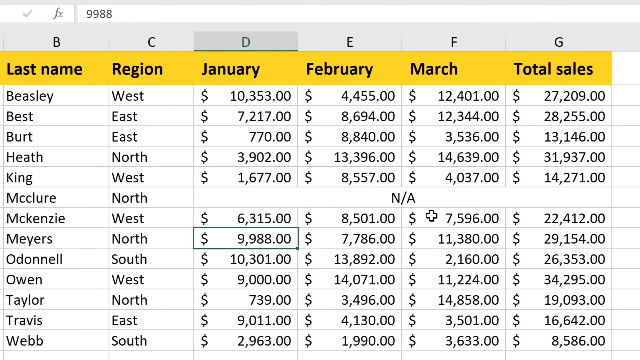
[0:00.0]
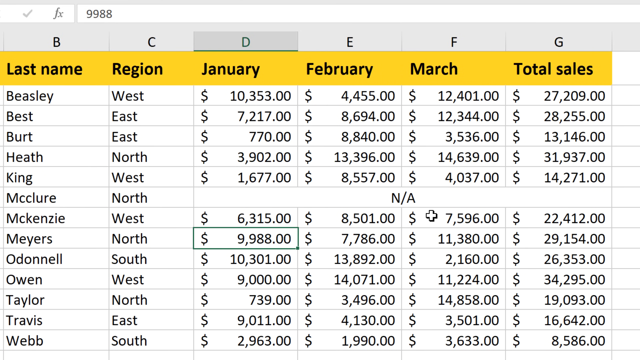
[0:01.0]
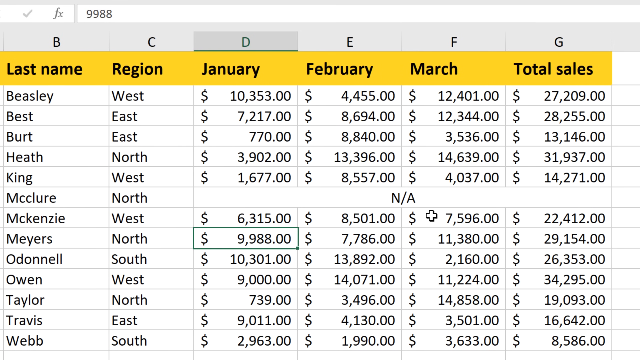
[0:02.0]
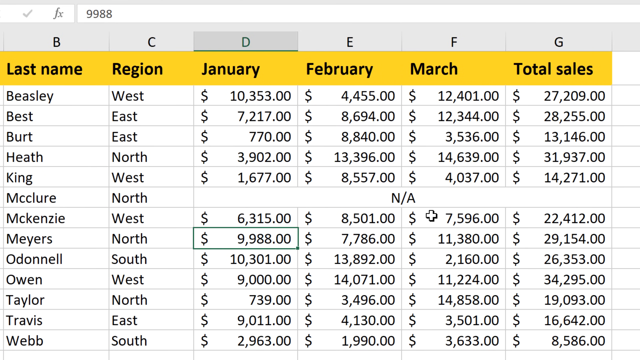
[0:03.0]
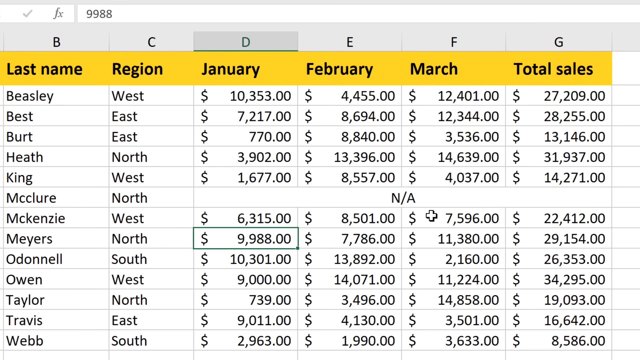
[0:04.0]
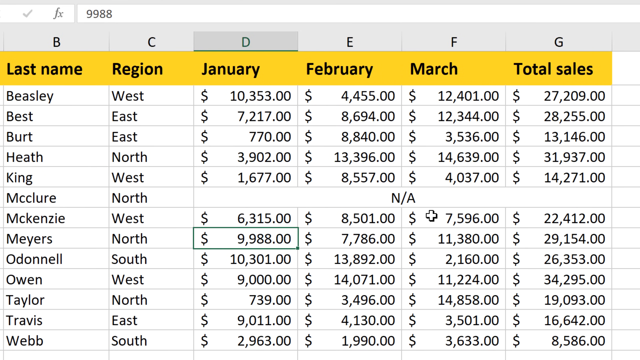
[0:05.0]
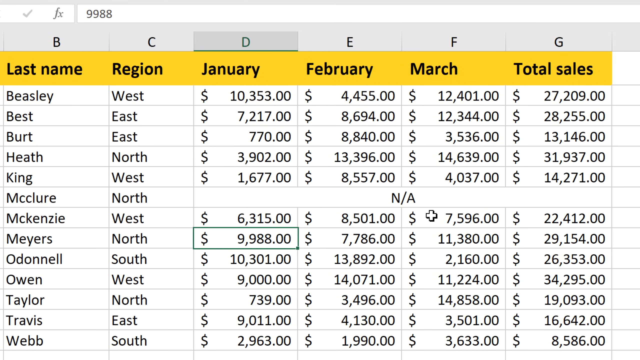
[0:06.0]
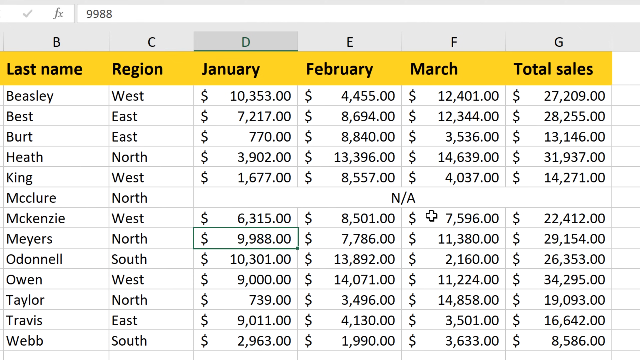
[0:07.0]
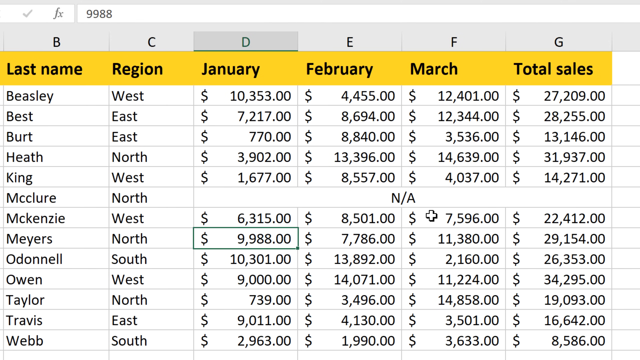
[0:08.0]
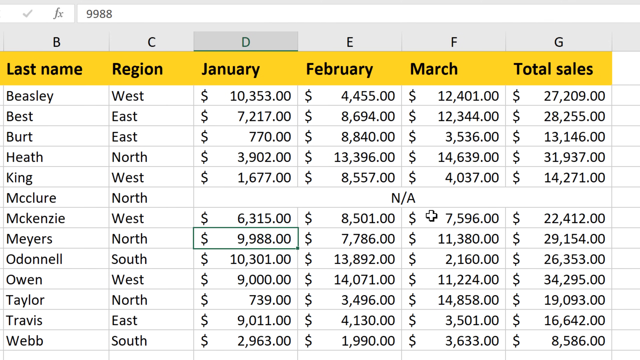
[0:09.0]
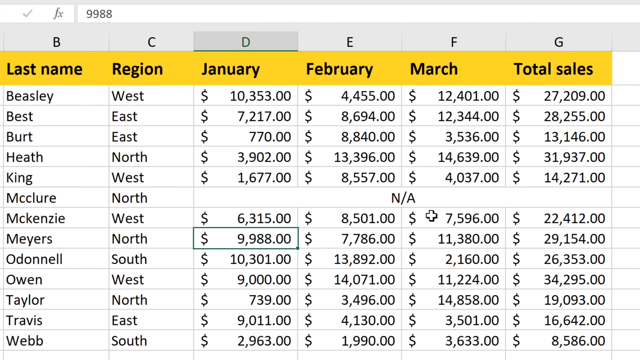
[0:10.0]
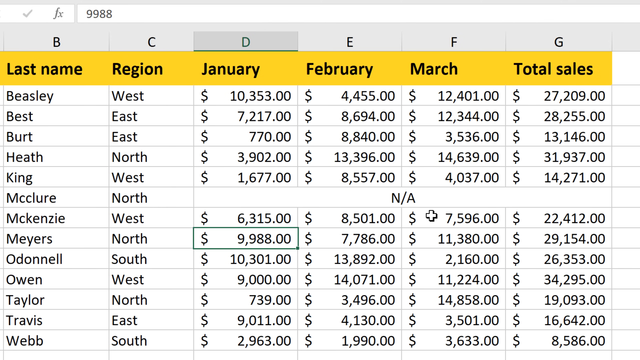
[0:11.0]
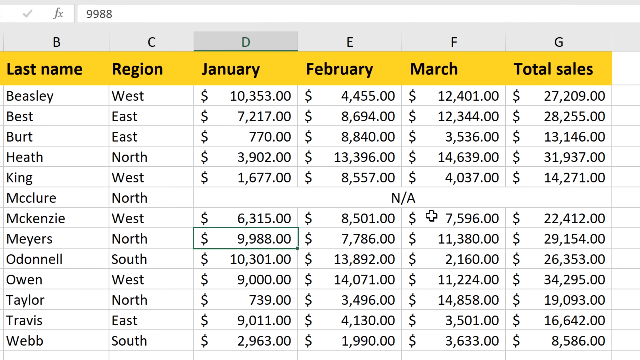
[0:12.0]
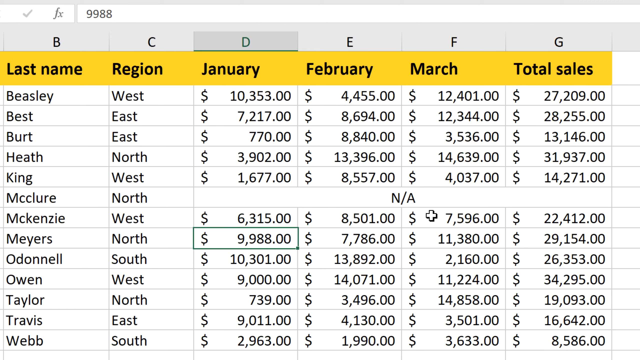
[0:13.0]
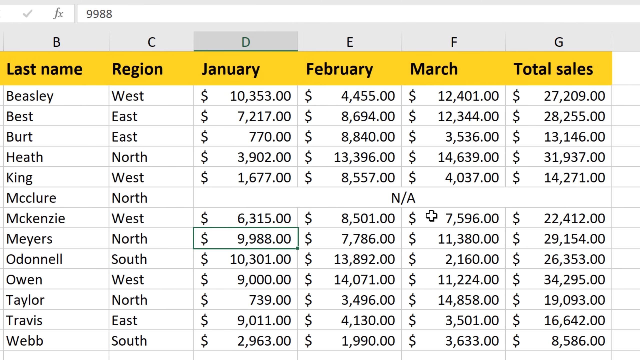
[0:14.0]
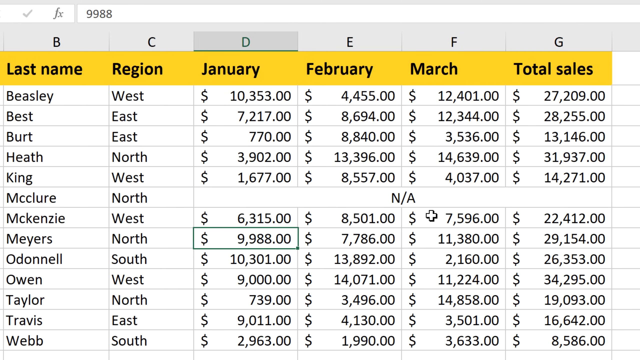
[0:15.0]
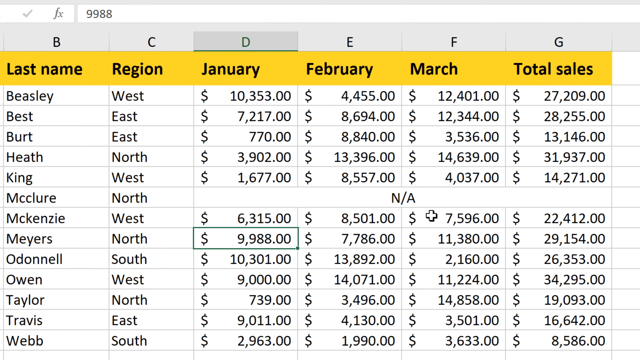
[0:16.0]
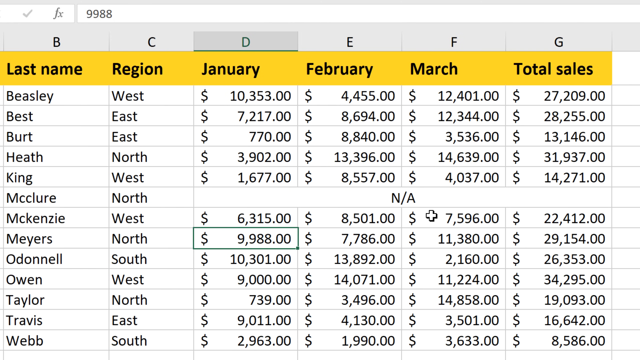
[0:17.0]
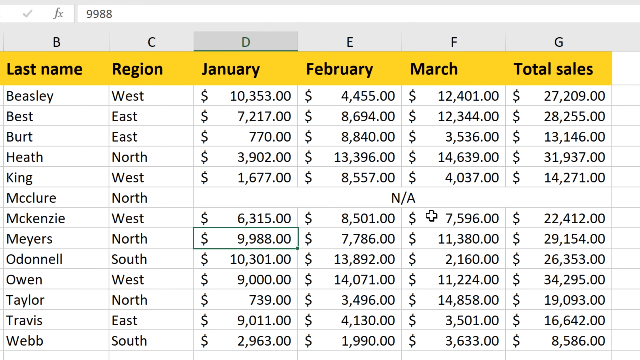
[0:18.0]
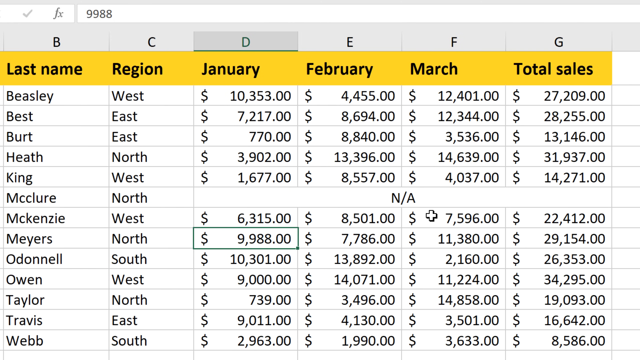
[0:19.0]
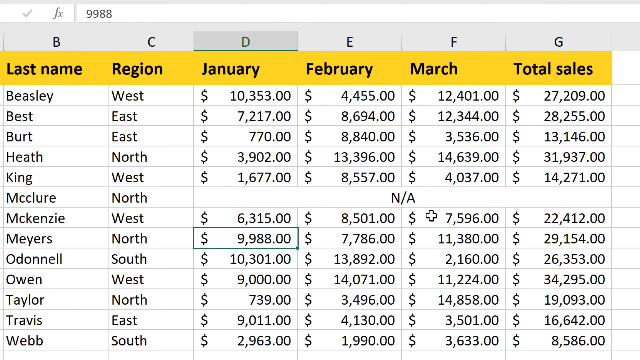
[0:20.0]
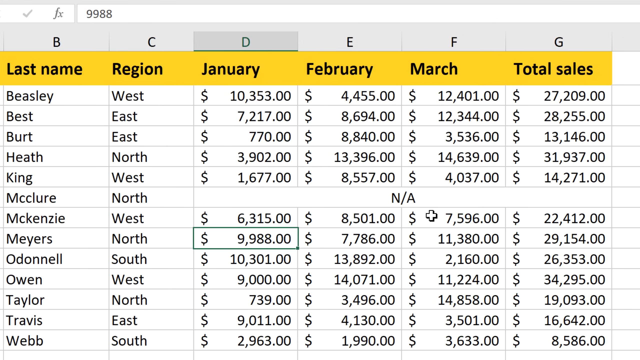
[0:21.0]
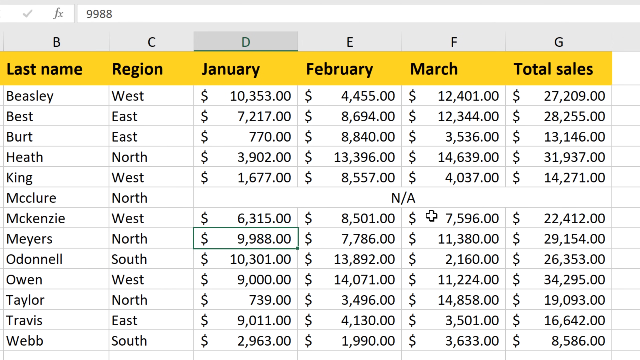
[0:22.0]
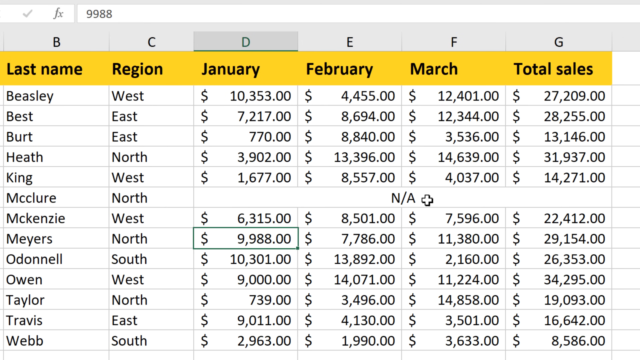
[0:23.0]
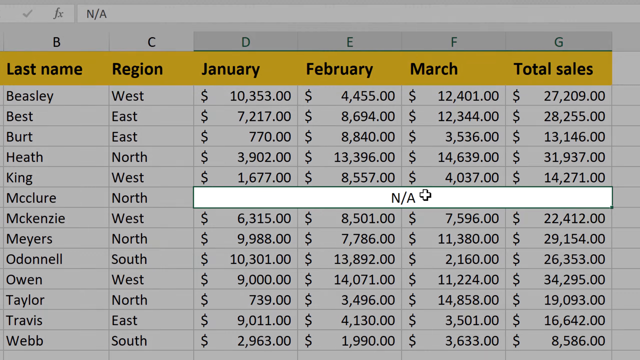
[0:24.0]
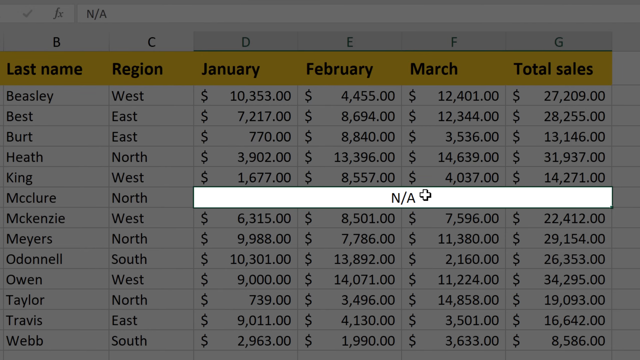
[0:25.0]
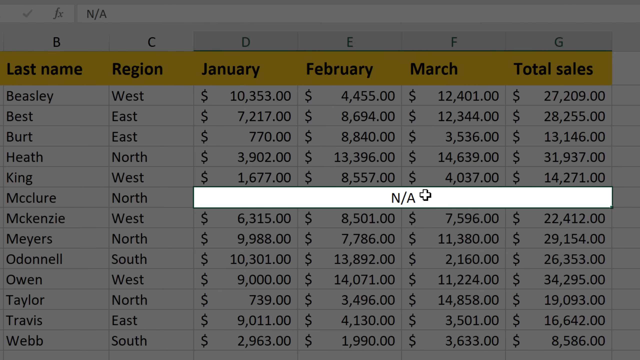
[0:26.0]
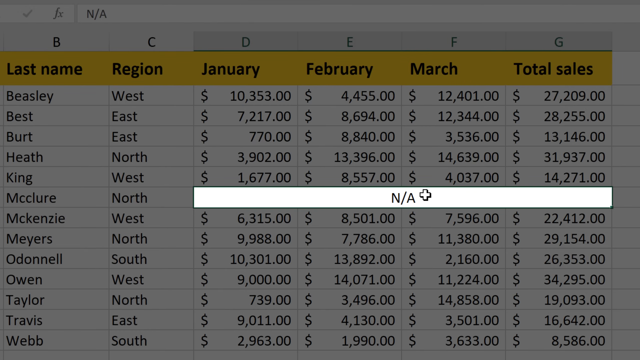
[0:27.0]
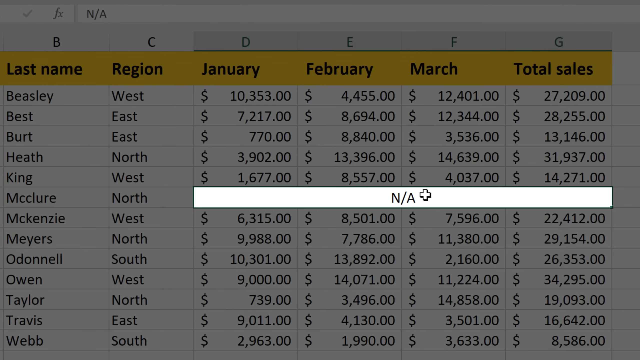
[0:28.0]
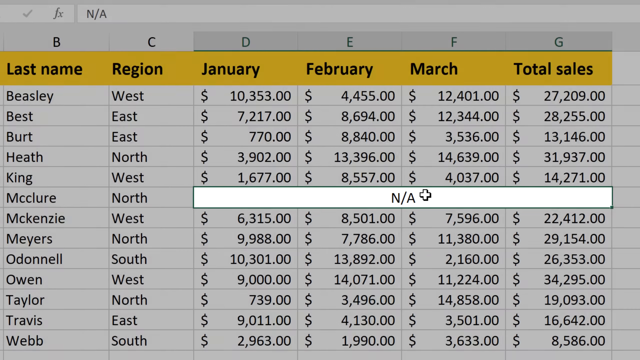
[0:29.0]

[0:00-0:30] A data table chart has six categories from left to right: last name, region, January, February, March, and total sales. Each name has a region, what looks like monthly income, and a total sales number on the right-hand side. The column letters at the top go B, C, D, E, F and G, and a number at the very top reads "9988". The screen has a white background with gray lines dividing the columns. The table stays on screen until a new tab pops up that says "NA" with a plus next to it, and the data for the last name McClure is completely deleted from the table.